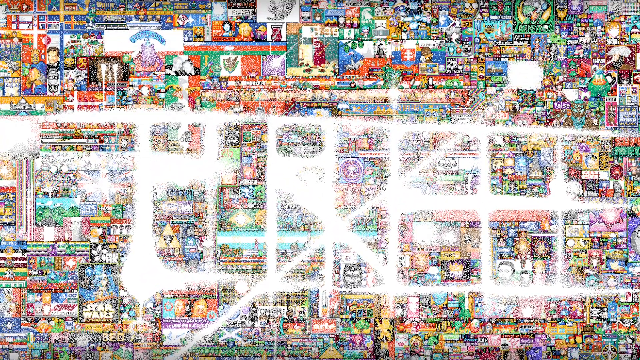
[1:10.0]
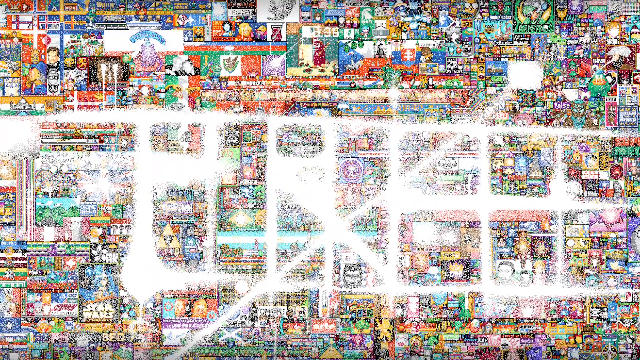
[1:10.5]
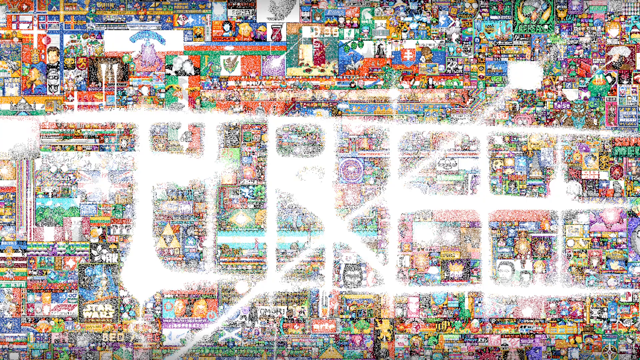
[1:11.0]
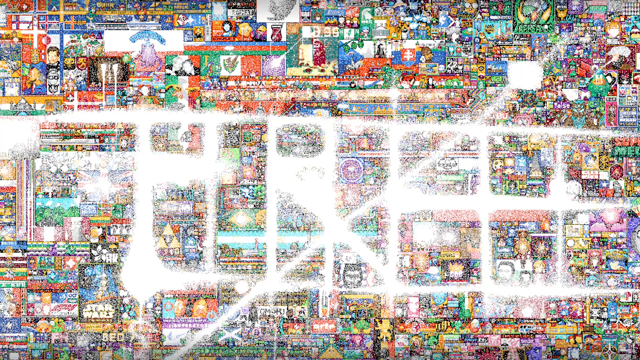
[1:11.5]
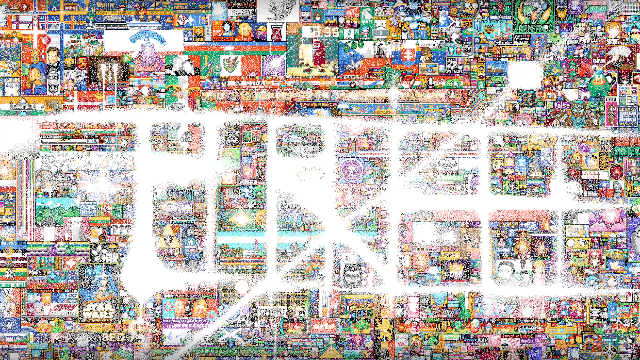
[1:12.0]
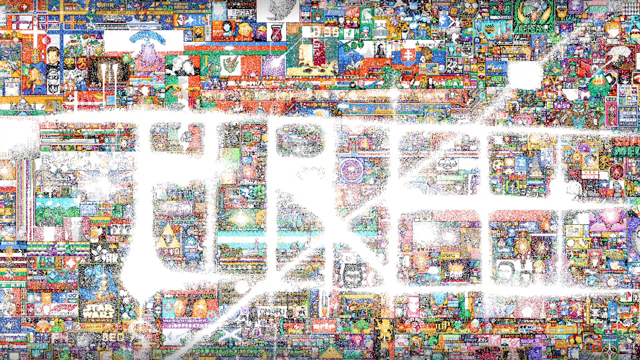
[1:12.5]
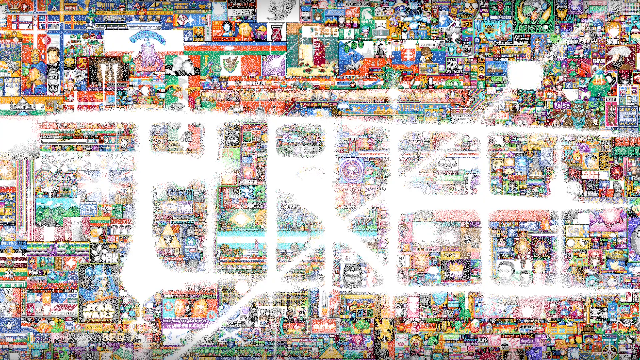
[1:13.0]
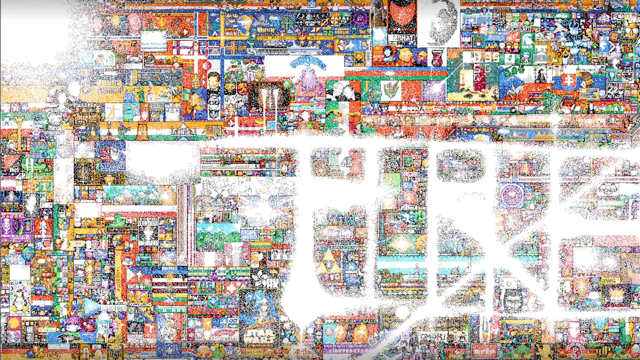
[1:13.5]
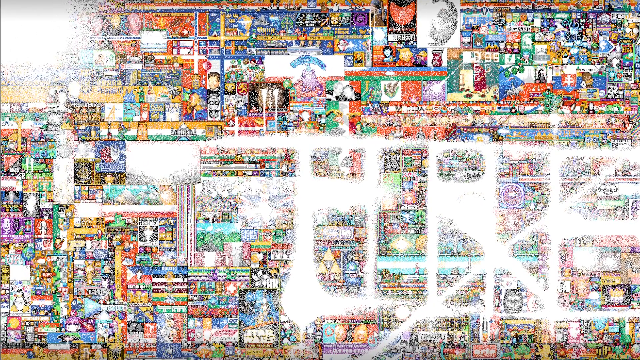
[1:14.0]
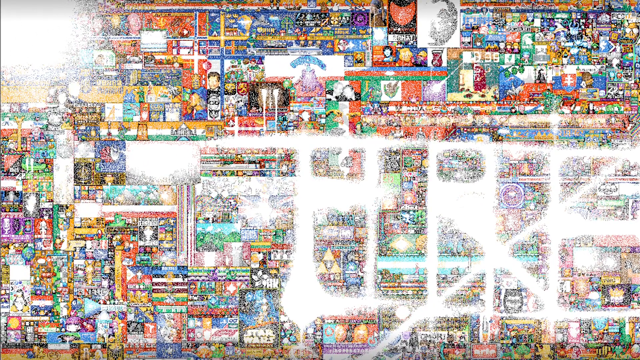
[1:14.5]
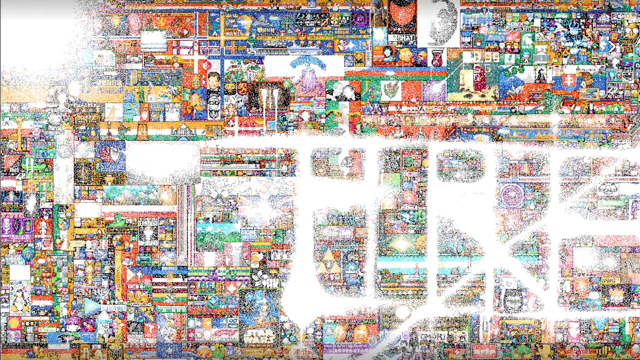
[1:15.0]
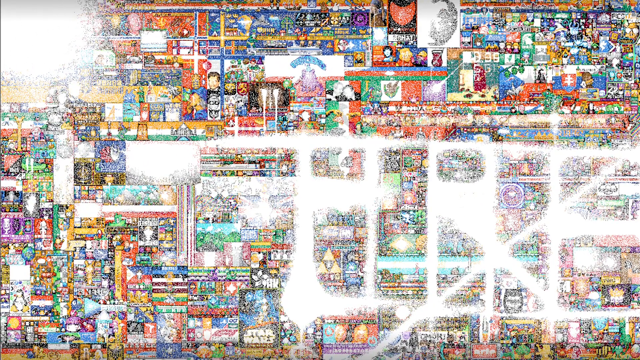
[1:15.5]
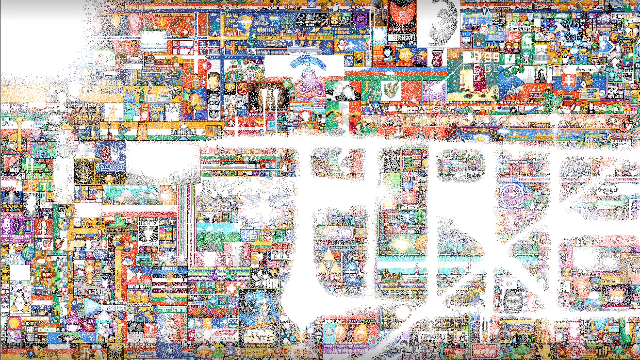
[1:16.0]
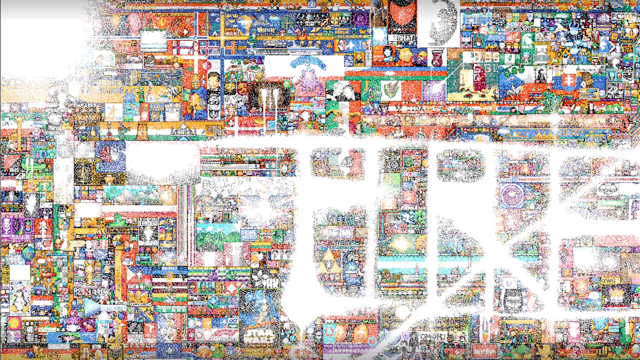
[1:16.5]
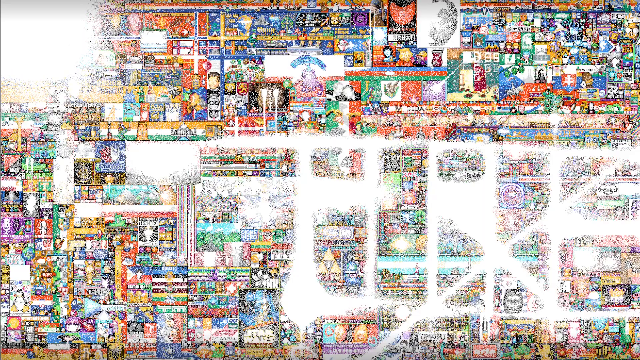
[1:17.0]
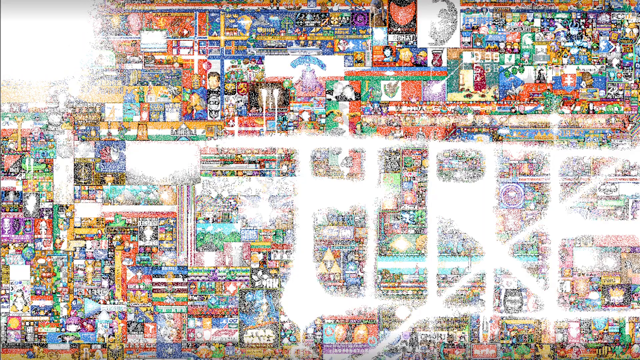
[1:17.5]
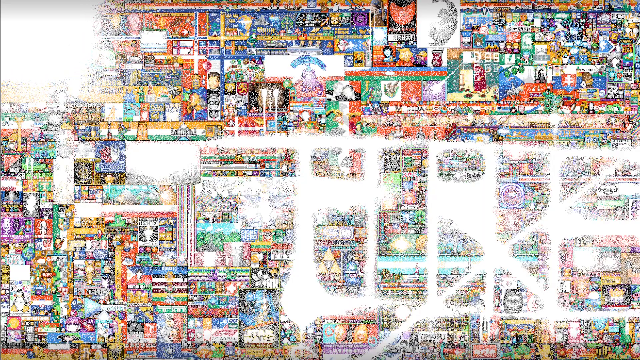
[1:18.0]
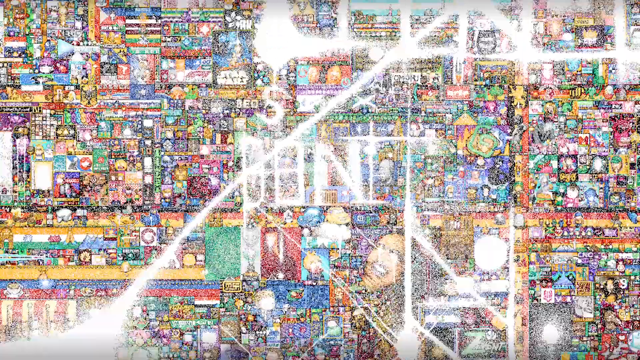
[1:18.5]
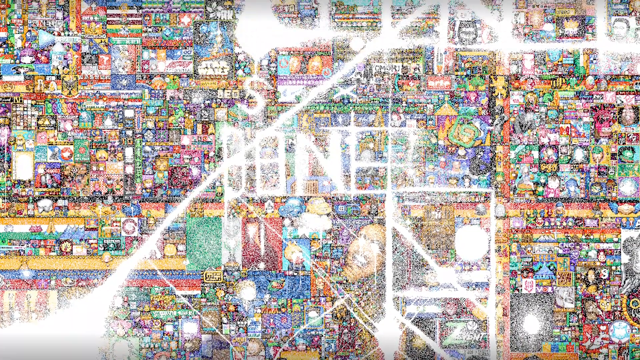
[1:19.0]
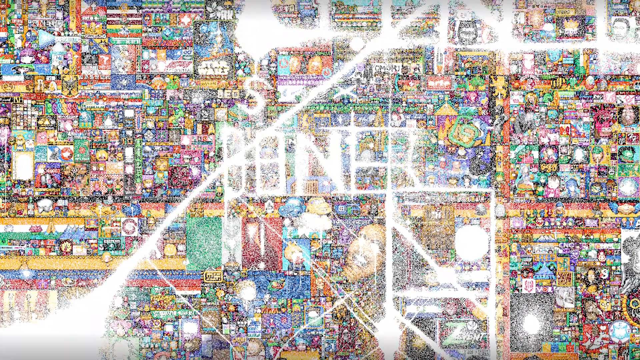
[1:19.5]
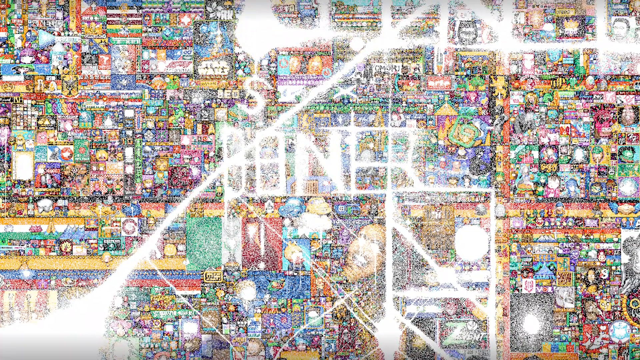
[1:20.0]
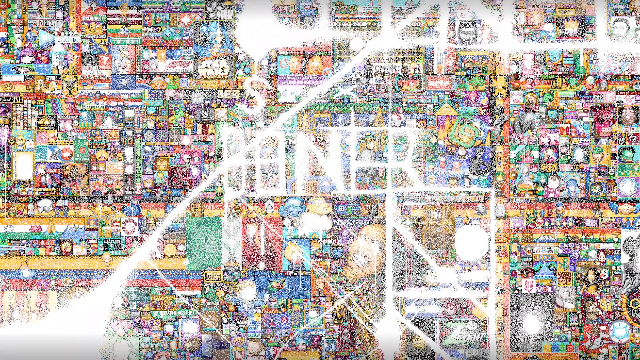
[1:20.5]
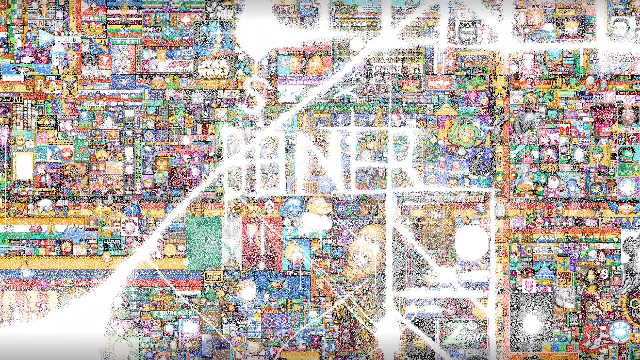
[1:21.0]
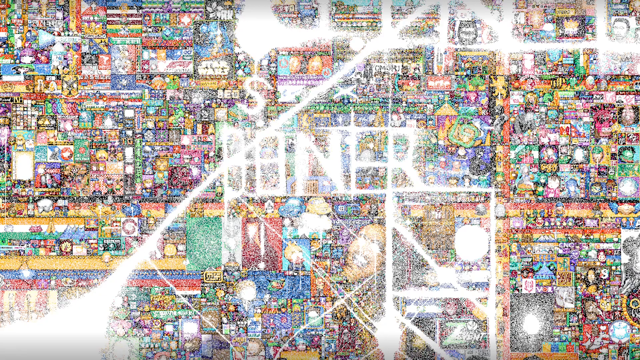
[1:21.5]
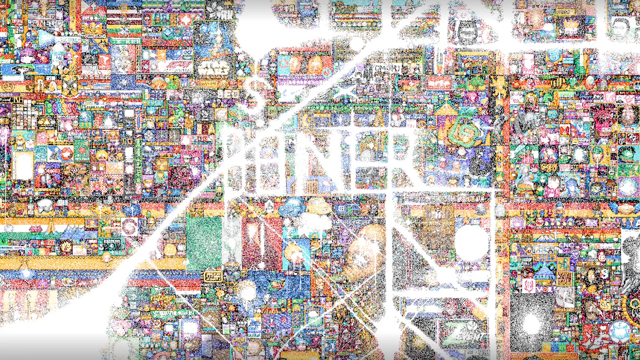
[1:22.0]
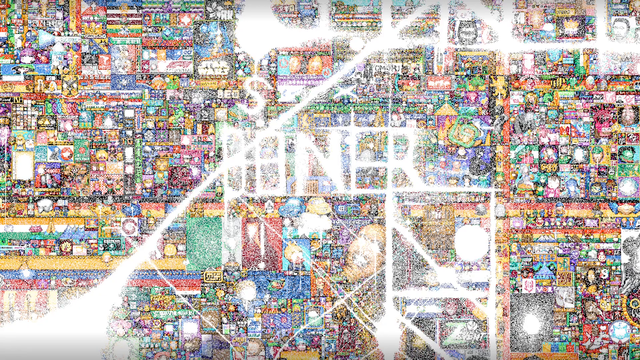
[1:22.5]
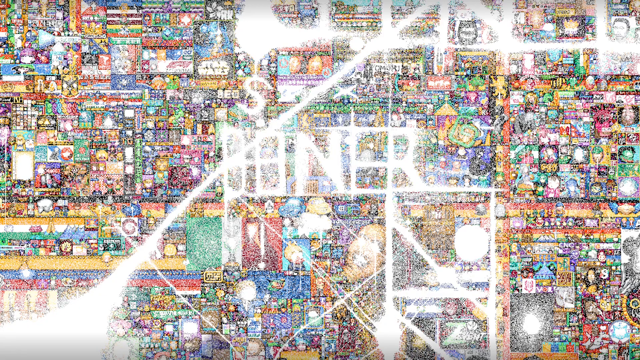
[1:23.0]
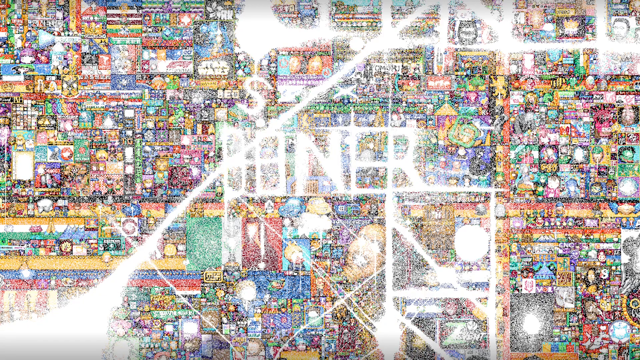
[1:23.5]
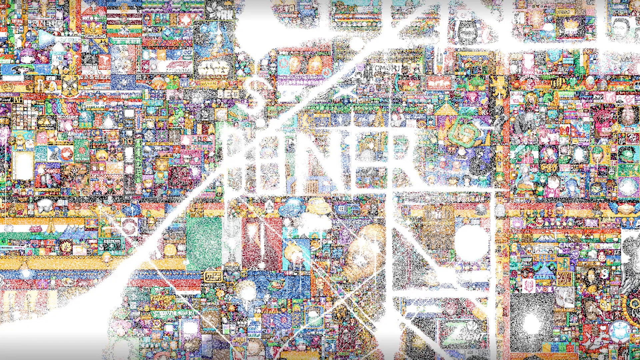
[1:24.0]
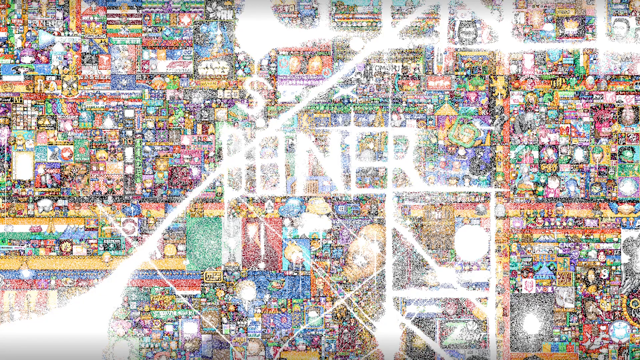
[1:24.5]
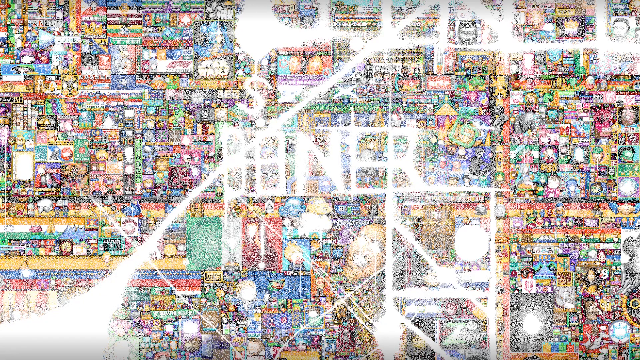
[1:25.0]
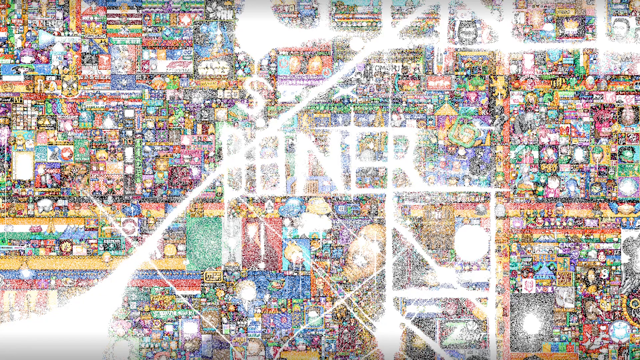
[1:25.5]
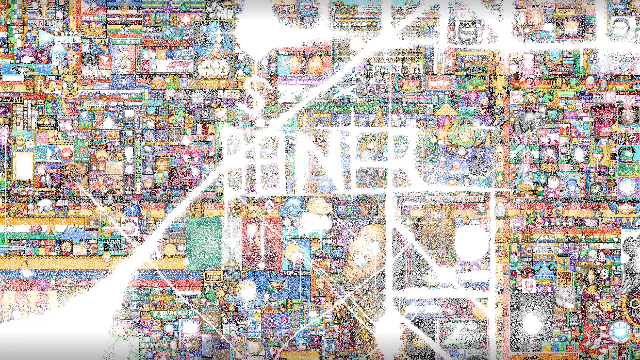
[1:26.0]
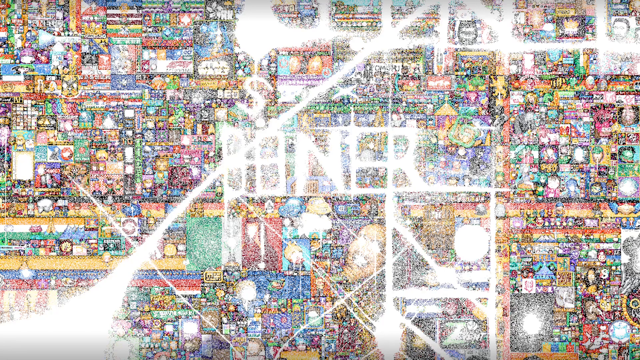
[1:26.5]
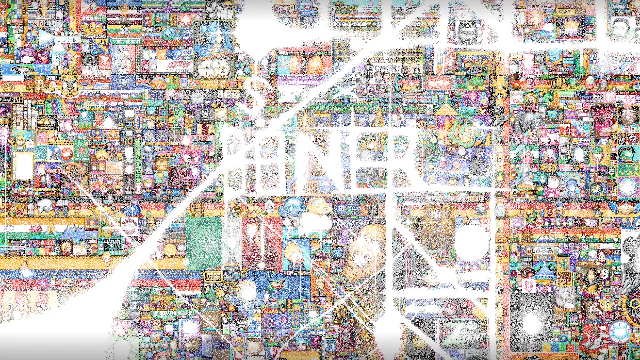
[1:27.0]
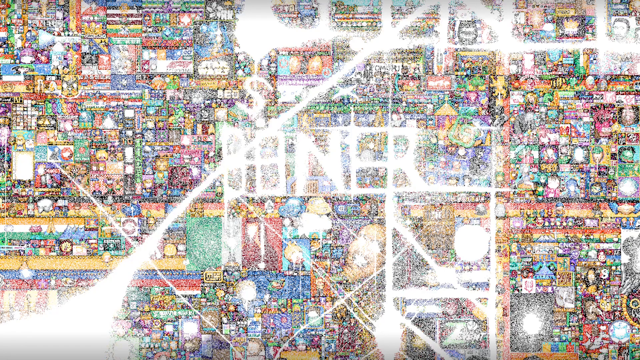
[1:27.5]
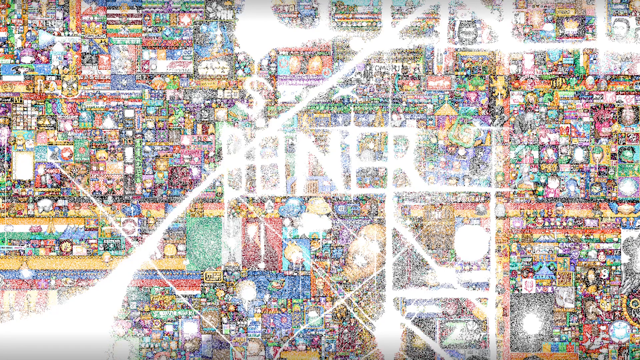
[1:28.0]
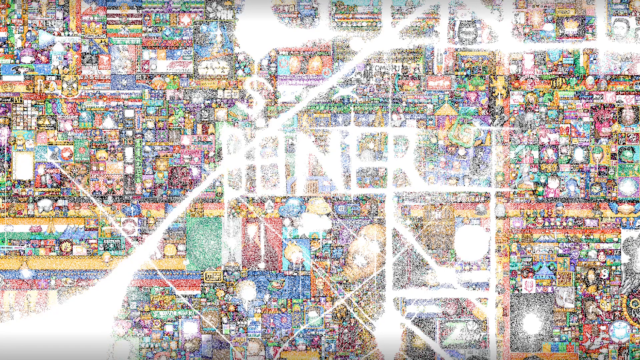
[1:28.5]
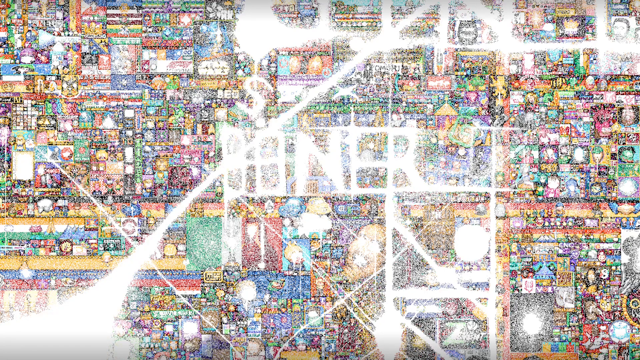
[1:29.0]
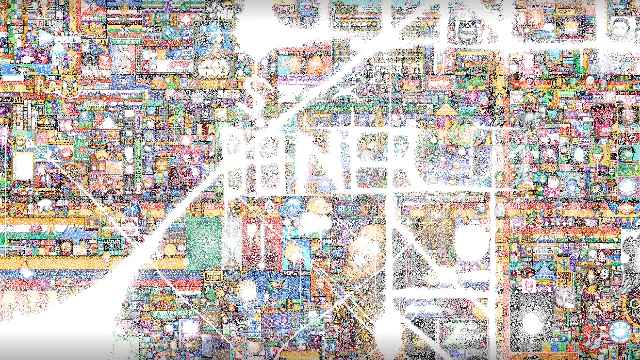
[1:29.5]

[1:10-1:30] Many particles are disintegrating. The Filipino flag appears, the view moves, and the German flag is visible. Everything disintegrates to form something like words out of the negative space, though it is unclear what is happening. Many Italy flags are everywhere. An orange, white and green flag apparently belongs to a European country, possibly Austria. Many flags of different countries appear, probably representing the subreddits of each country. The German flag, Star Wars, and many anime characters are visible. Everything keeps disintegrating, forming some map or crossroads within the black negative space.